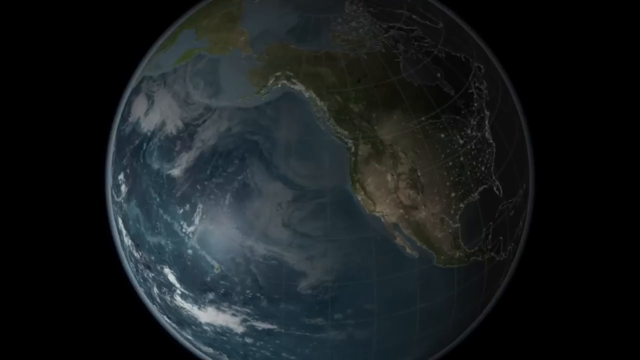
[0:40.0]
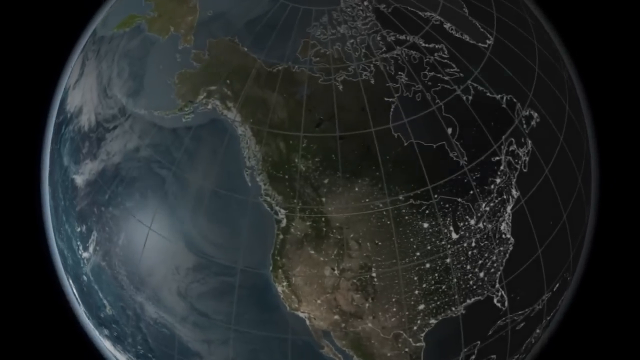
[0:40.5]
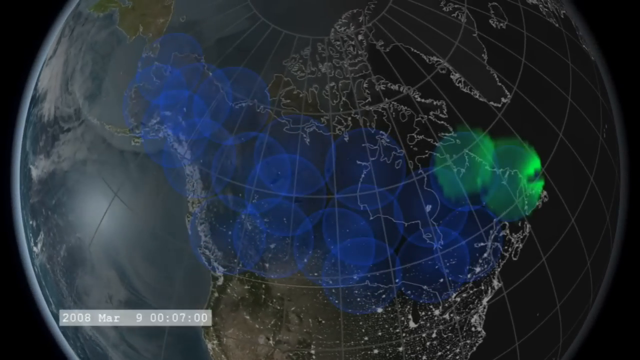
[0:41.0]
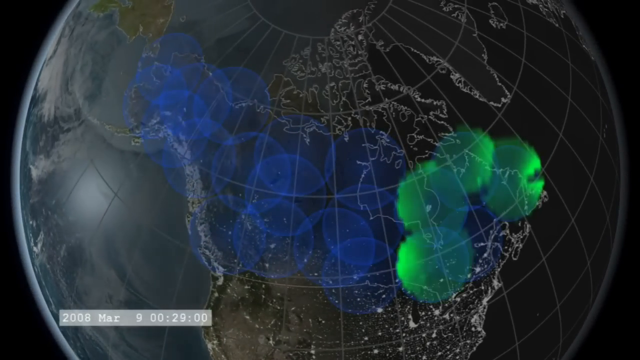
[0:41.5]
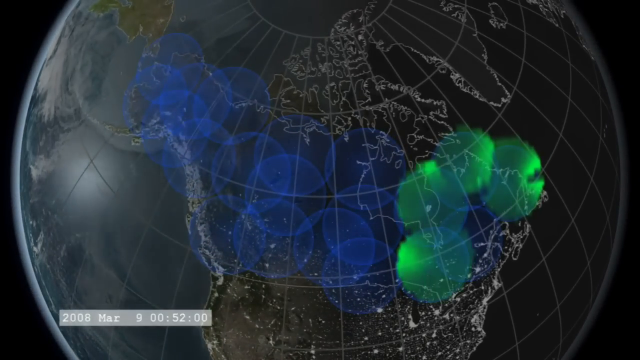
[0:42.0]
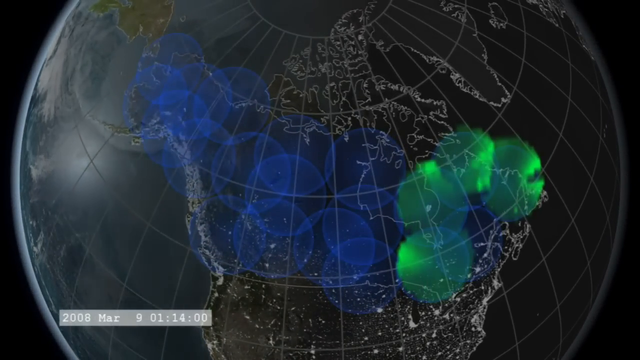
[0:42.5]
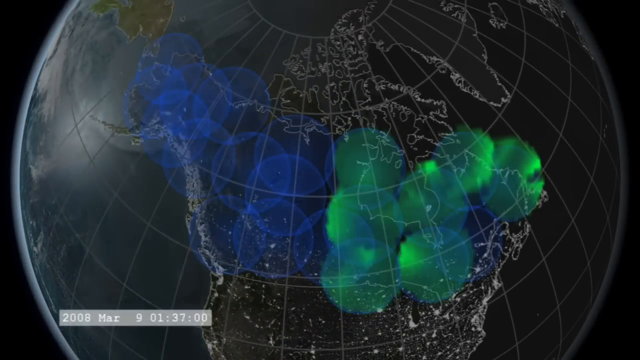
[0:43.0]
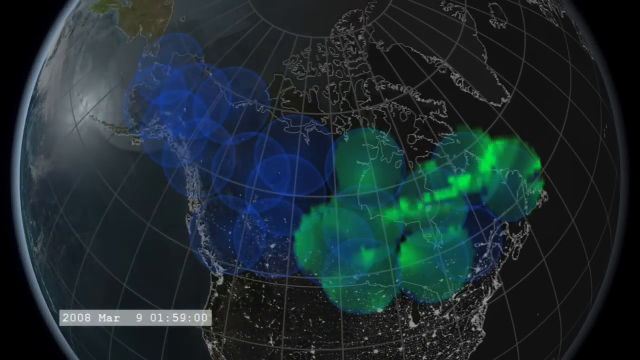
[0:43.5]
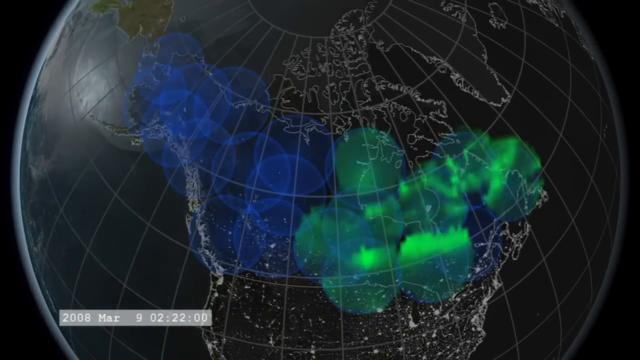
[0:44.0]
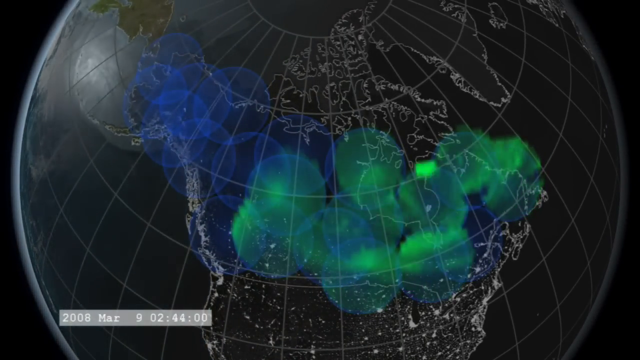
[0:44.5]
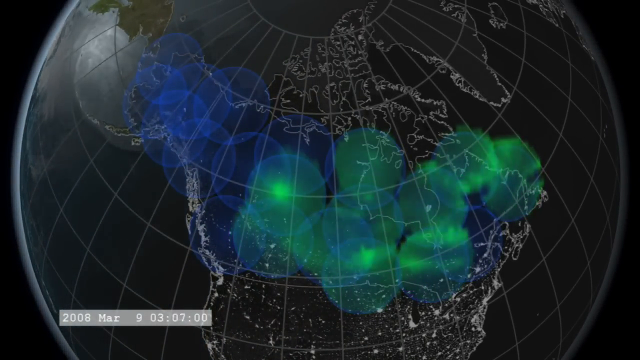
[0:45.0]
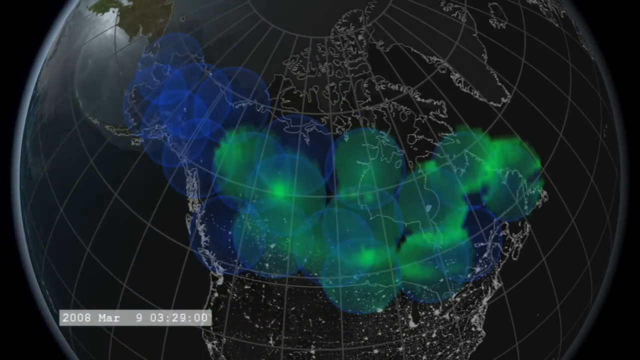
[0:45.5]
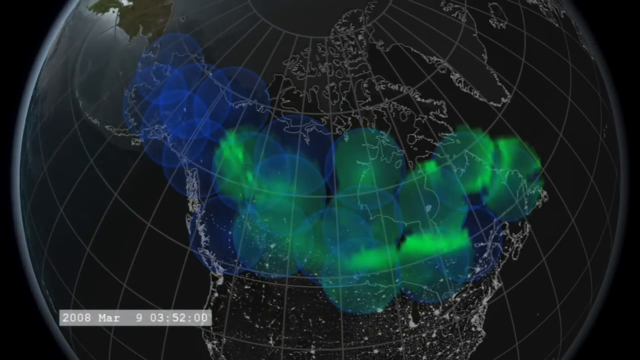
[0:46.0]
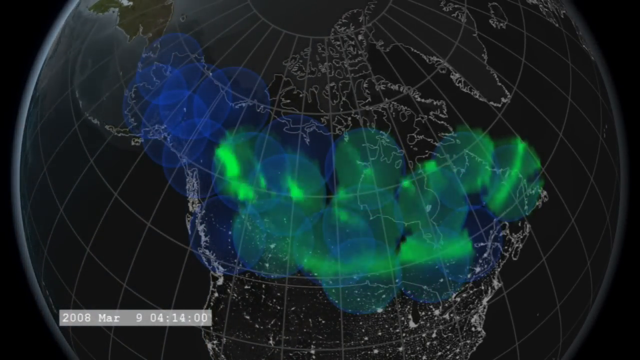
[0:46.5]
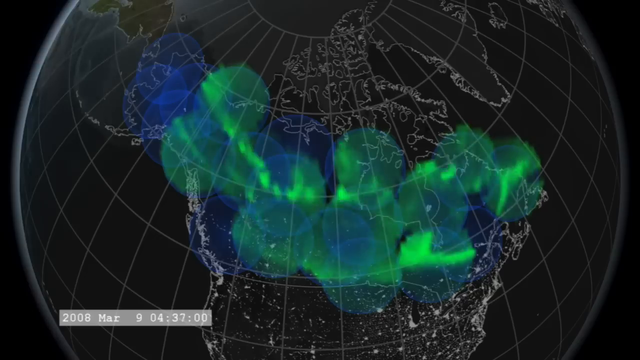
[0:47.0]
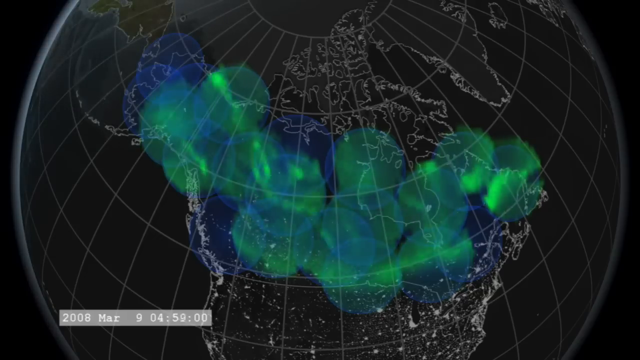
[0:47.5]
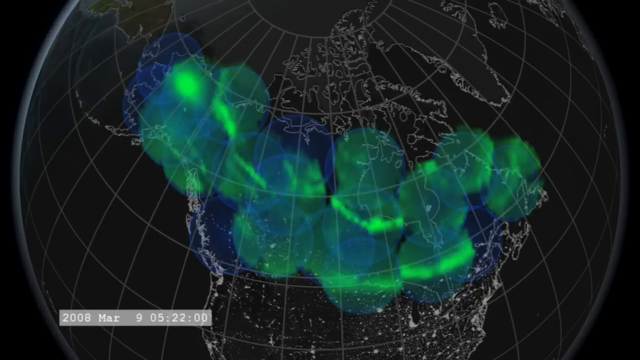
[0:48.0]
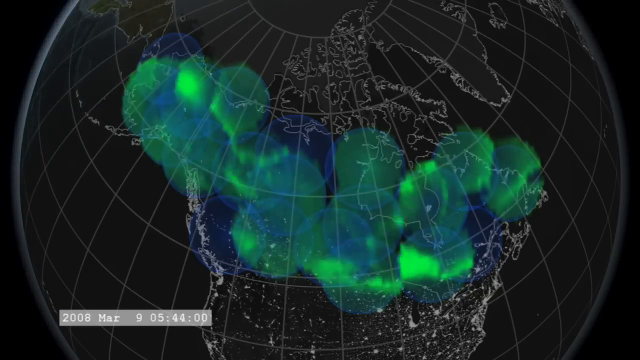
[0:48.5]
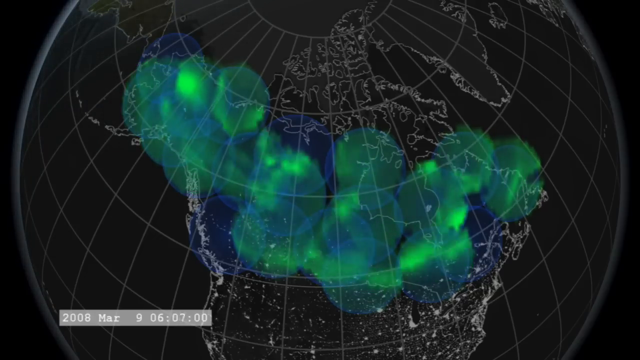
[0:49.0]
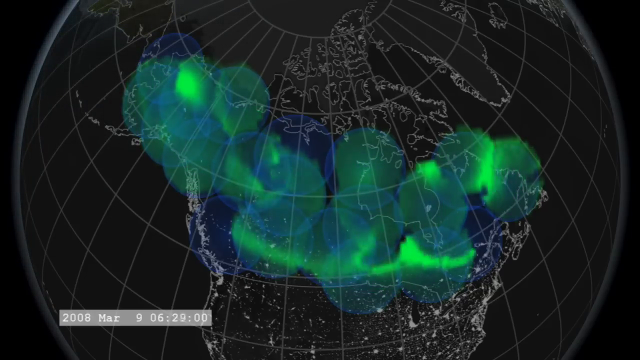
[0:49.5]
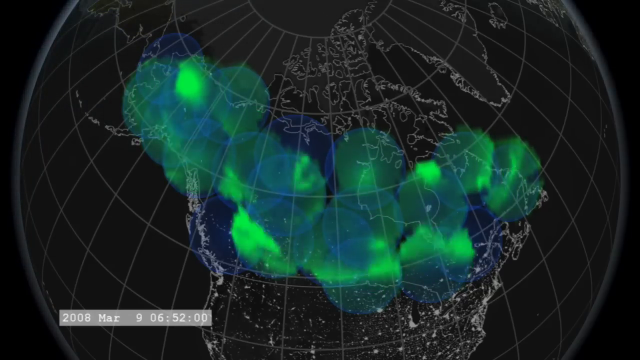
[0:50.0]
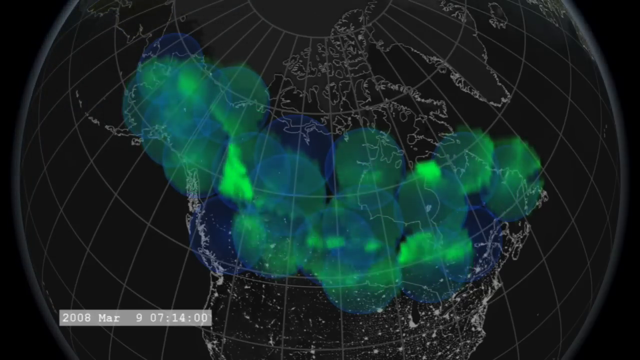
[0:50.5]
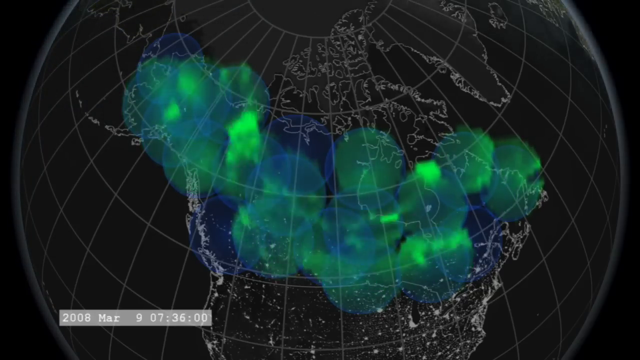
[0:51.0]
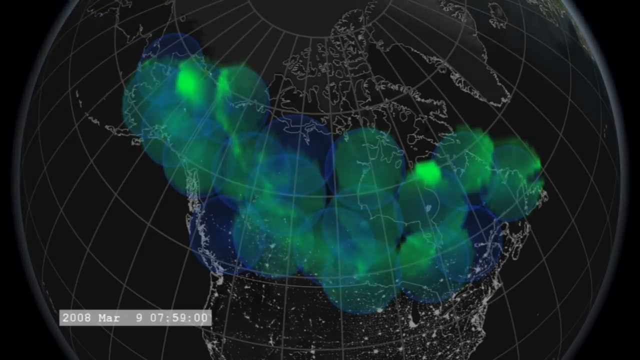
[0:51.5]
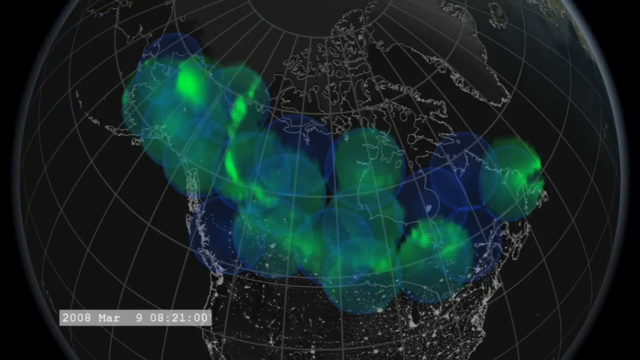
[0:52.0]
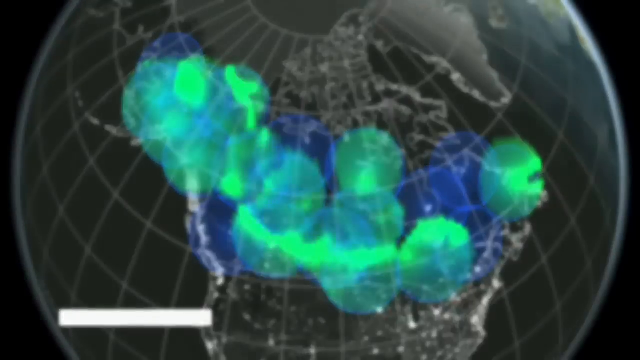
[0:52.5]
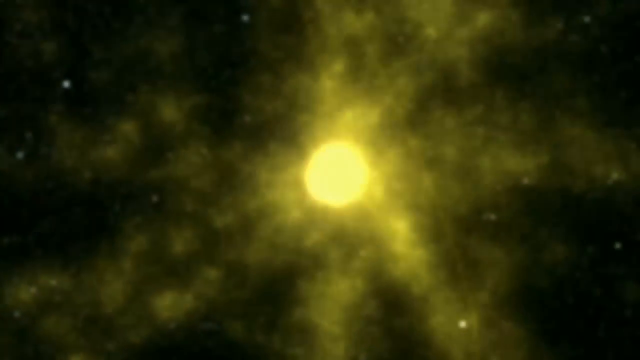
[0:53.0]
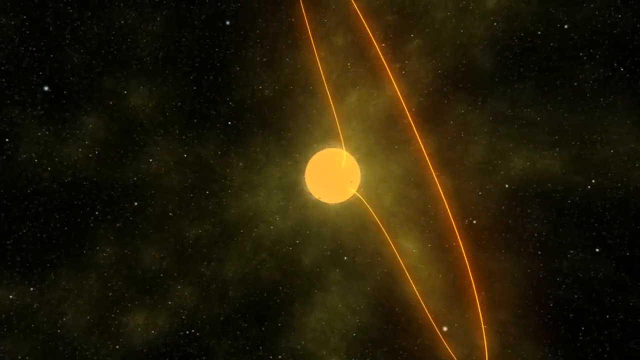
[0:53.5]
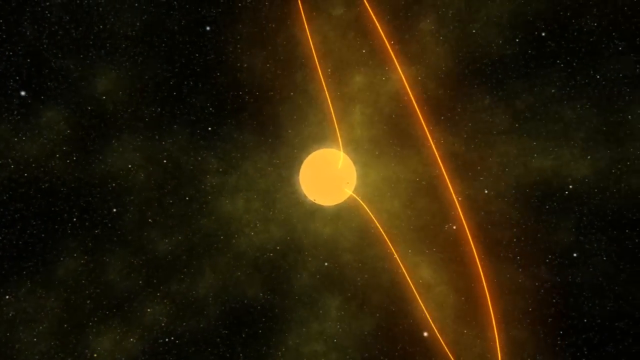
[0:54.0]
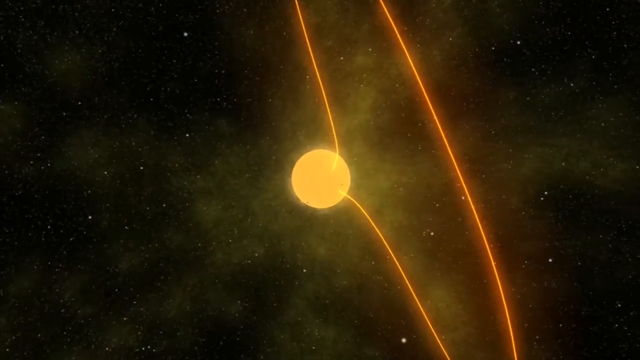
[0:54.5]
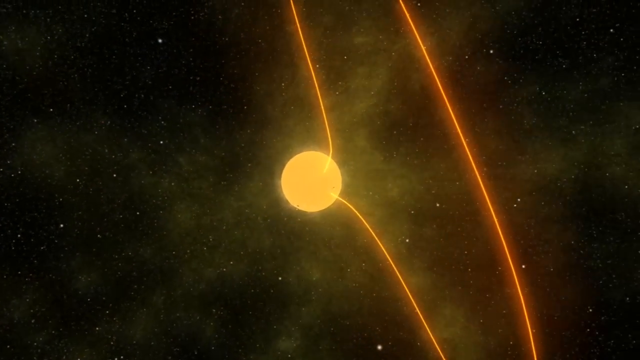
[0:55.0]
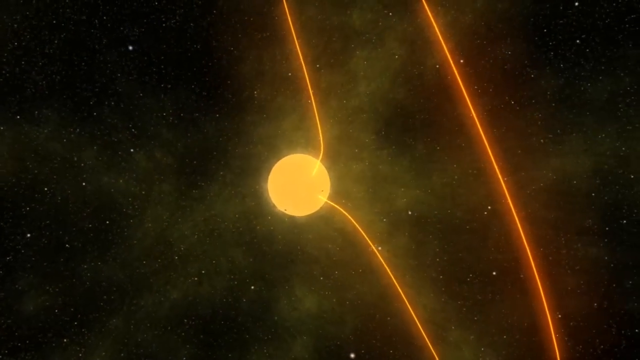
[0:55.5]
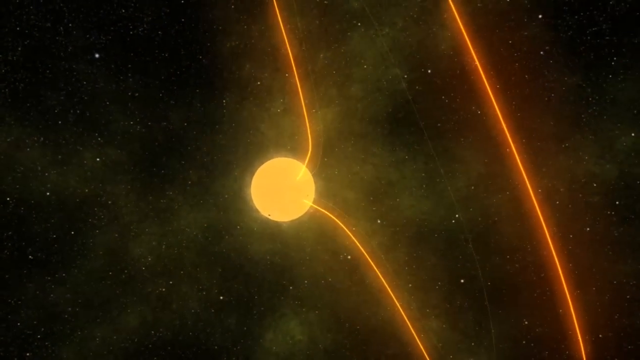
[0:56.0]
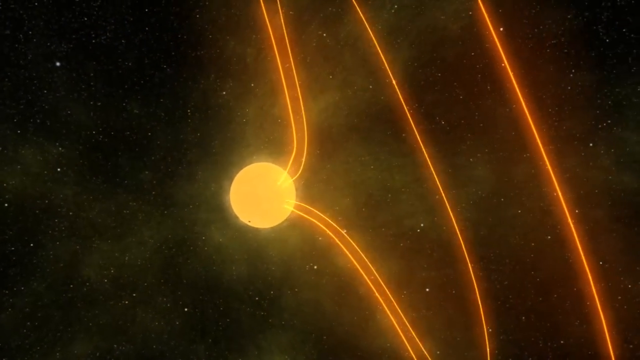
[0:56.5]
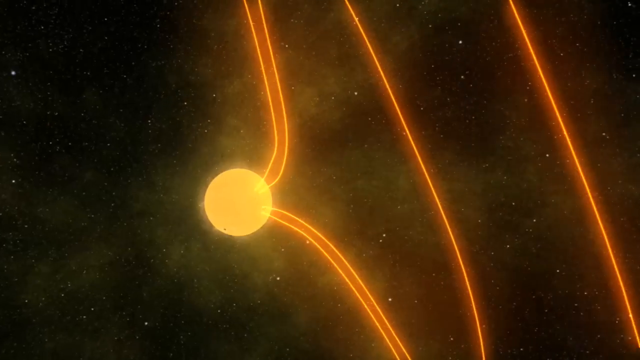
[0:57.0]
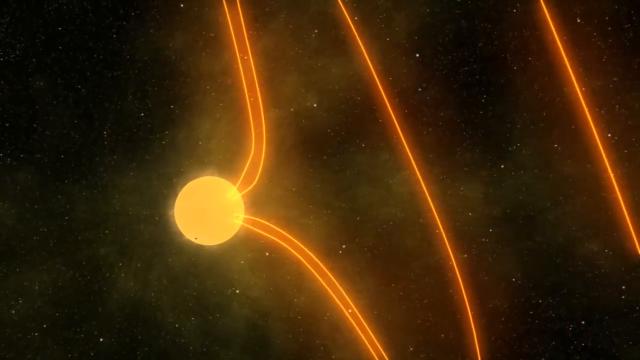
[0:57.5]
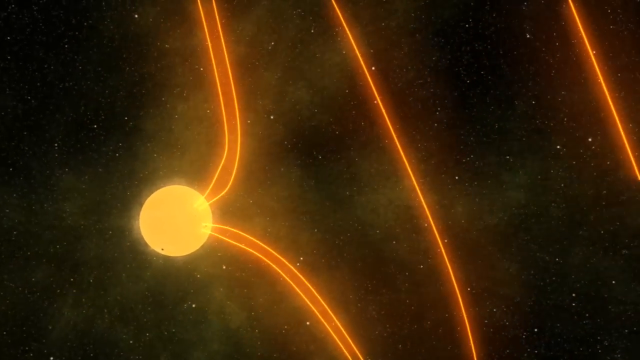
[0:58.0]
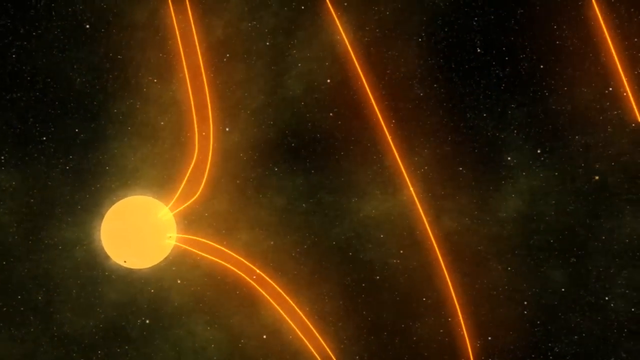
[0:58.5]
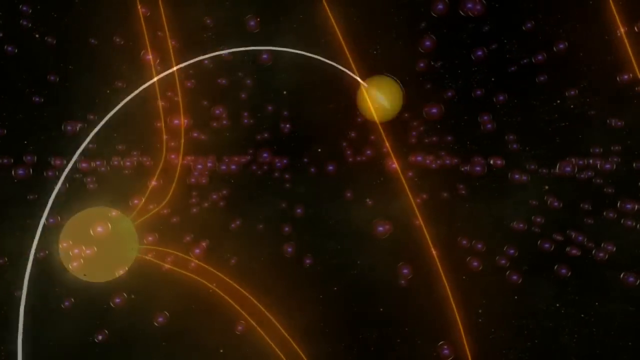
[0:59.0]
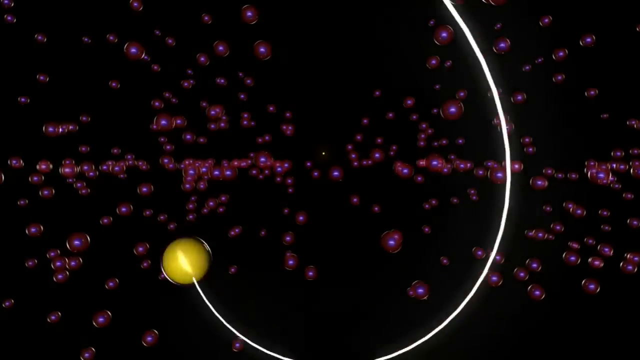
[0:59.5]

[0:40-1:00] A graphic shows the planet Earth from above, from space, with its continents and land masses and the large ocean mass covering most of the globe. The globe rotates round to North America, and blue and green circles appear at the top of the map: 10 blue circles on the left-hand side and approximately 10 green circles on the right-hand side. The green flickers and expands across the whole top of the map, seemingly a representation of the aurora borealis. The view switches to another graphic that seems to be the sun, with rays of yellow lines coming out of it and flying outward. The map of the world is split into grids, with lights and land masses represented.